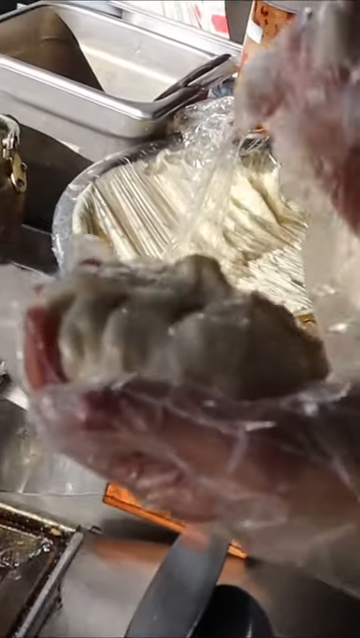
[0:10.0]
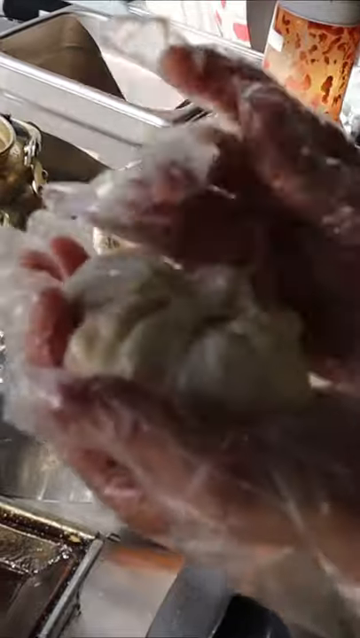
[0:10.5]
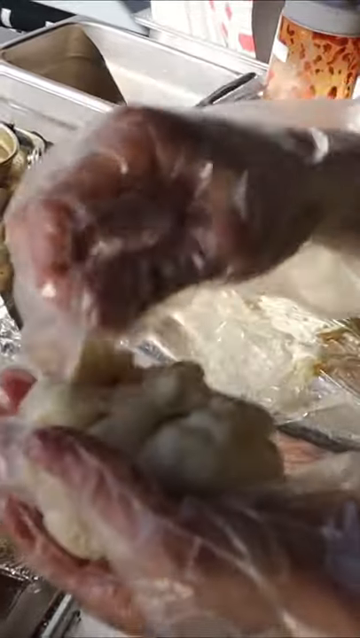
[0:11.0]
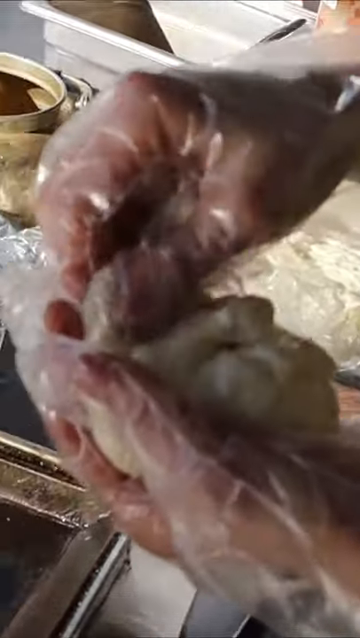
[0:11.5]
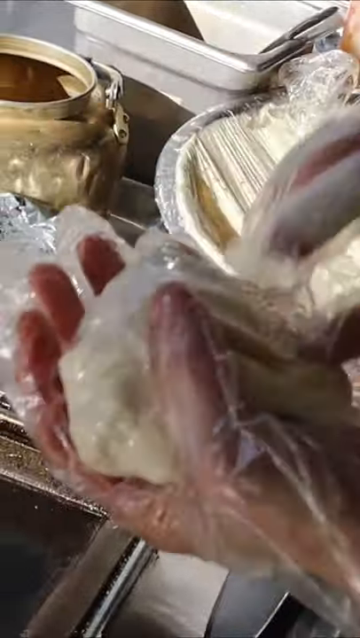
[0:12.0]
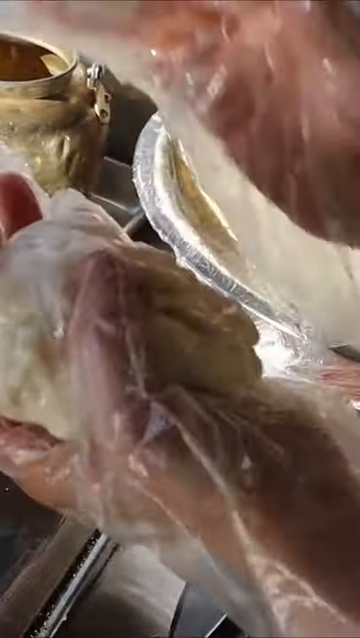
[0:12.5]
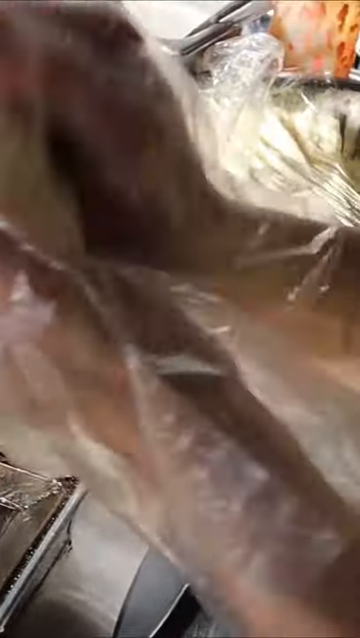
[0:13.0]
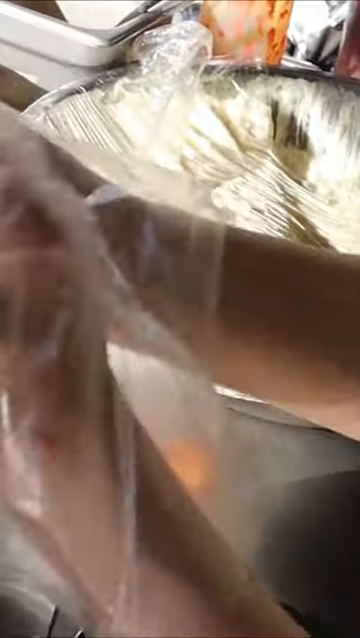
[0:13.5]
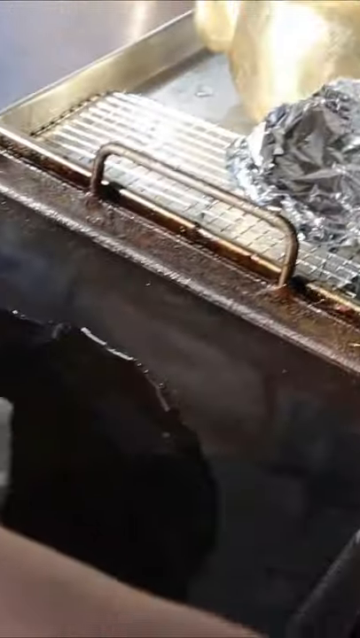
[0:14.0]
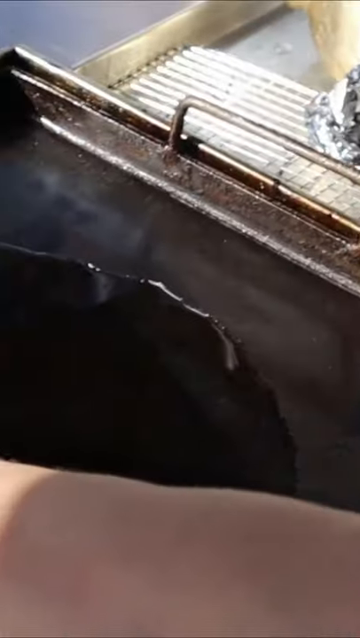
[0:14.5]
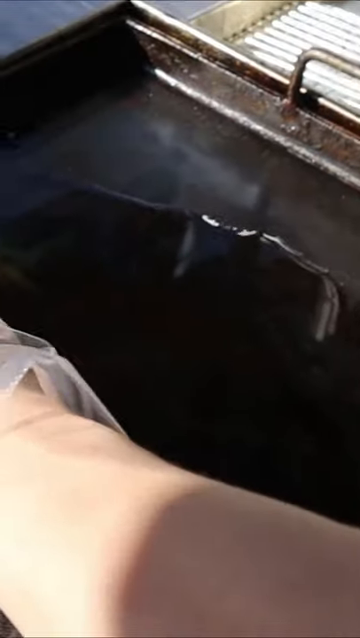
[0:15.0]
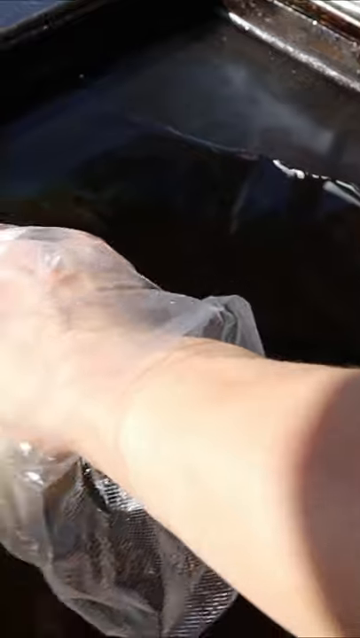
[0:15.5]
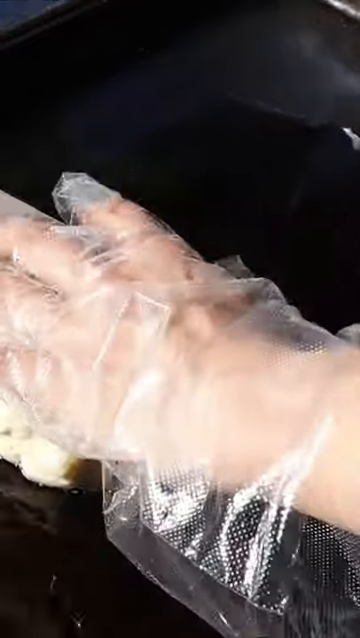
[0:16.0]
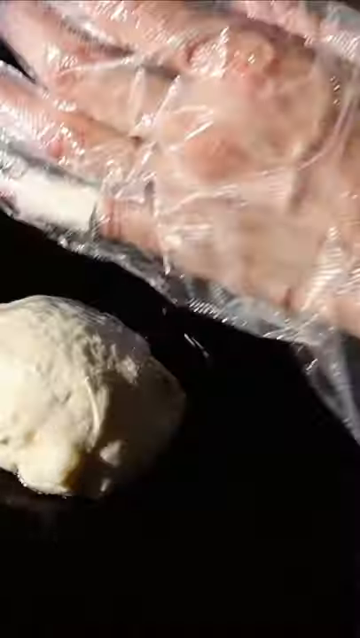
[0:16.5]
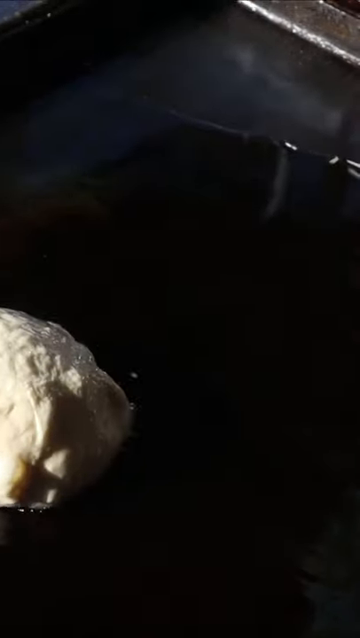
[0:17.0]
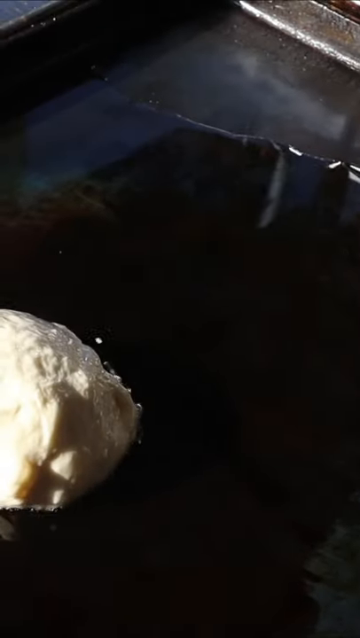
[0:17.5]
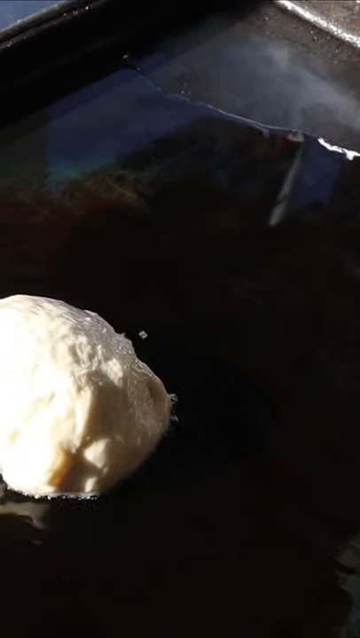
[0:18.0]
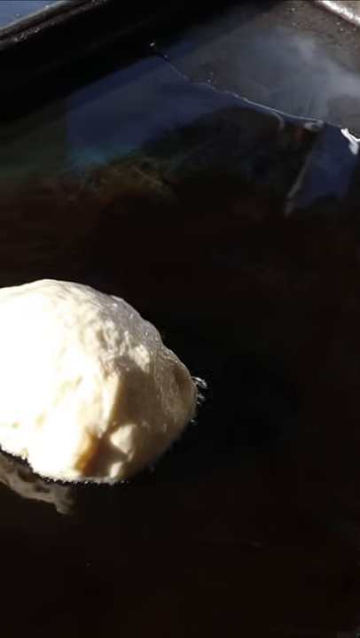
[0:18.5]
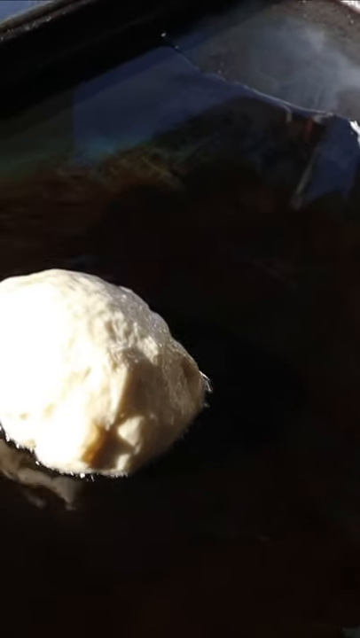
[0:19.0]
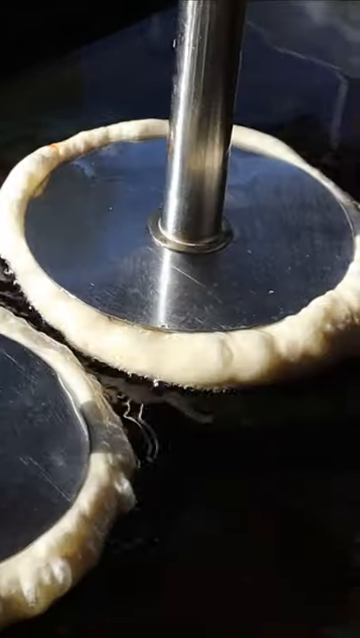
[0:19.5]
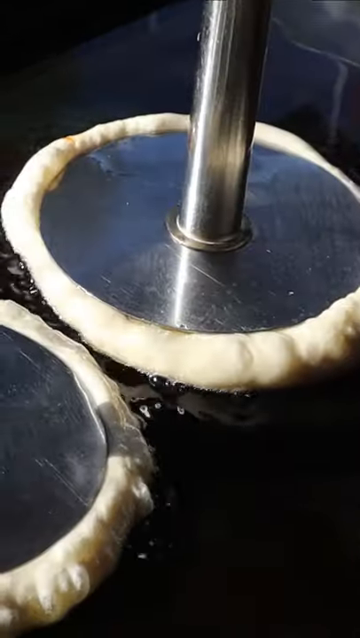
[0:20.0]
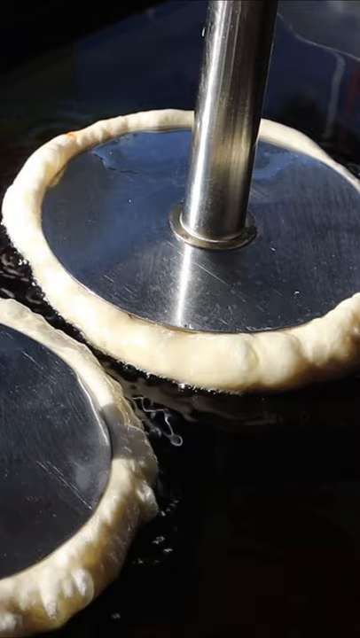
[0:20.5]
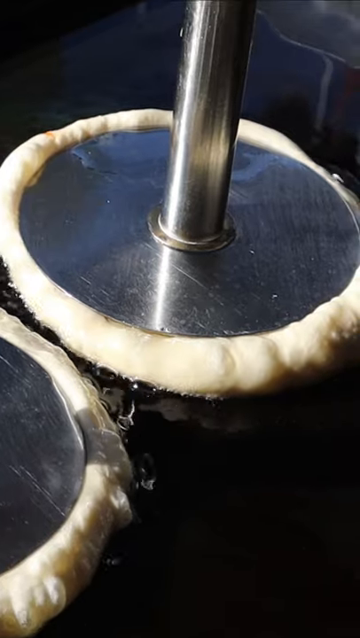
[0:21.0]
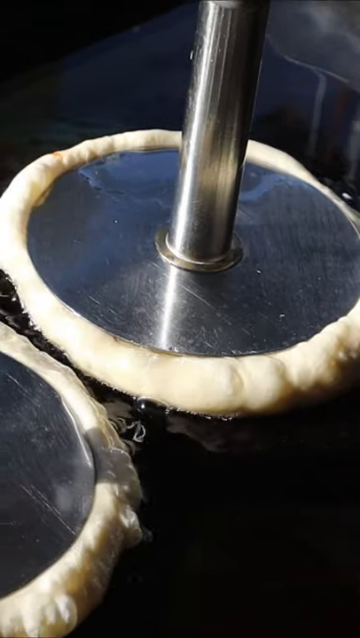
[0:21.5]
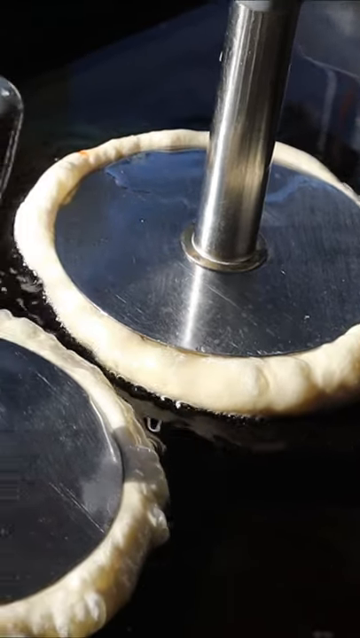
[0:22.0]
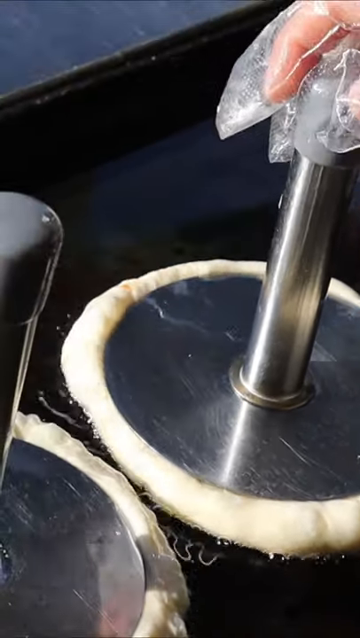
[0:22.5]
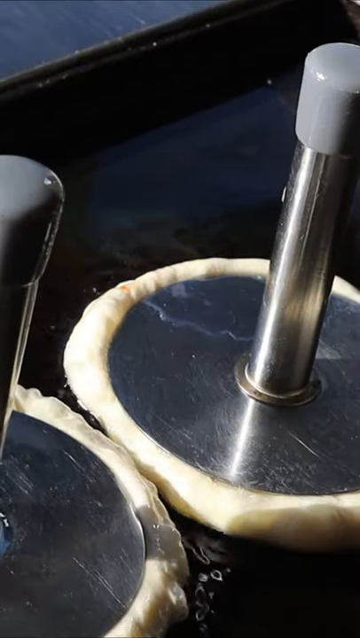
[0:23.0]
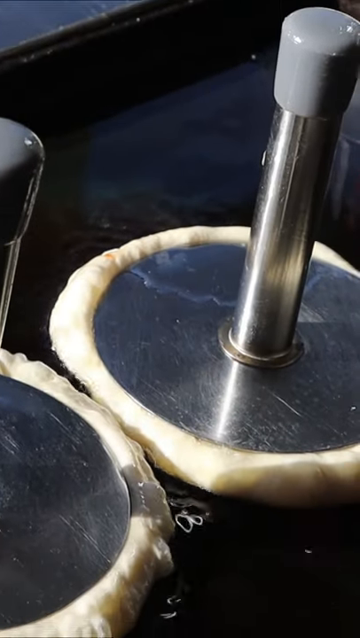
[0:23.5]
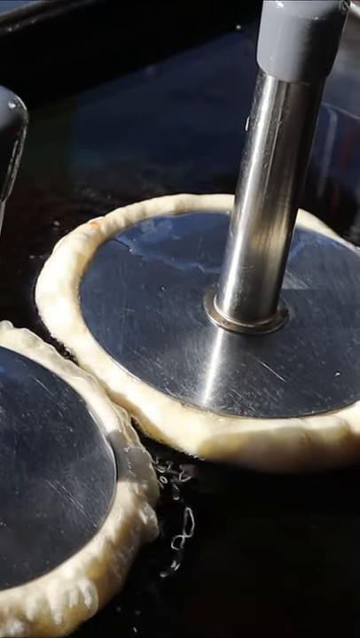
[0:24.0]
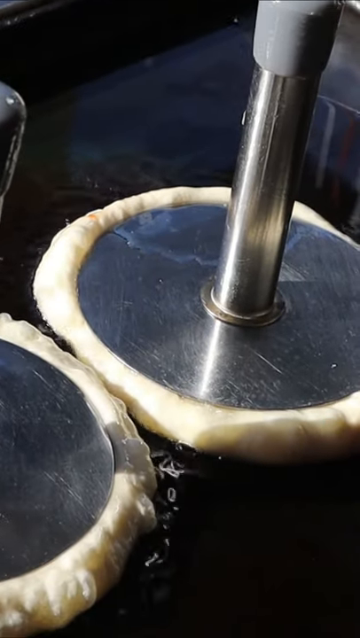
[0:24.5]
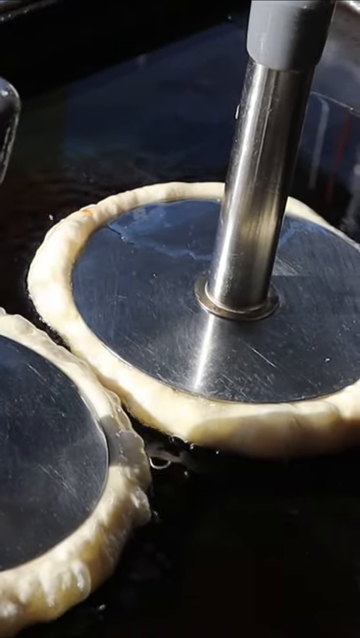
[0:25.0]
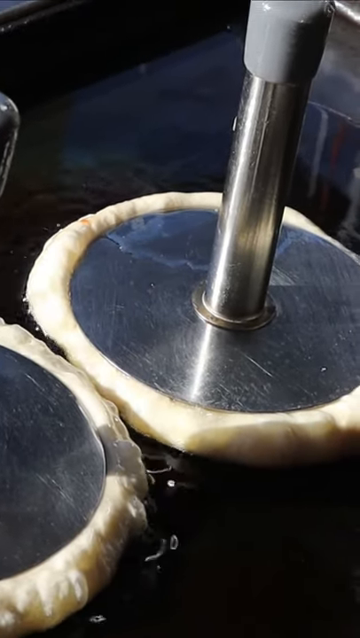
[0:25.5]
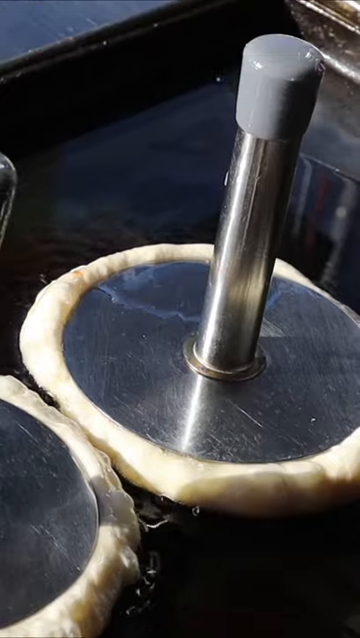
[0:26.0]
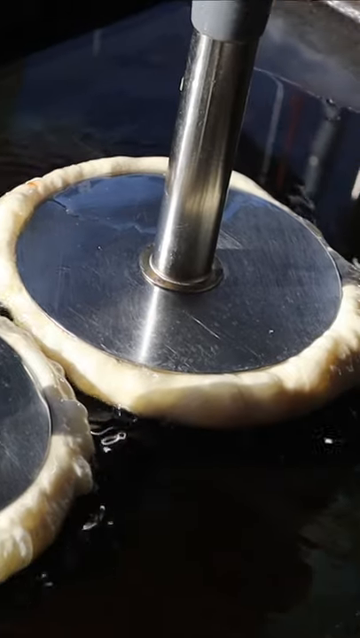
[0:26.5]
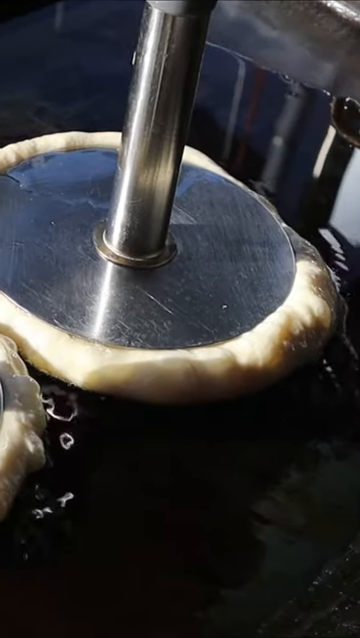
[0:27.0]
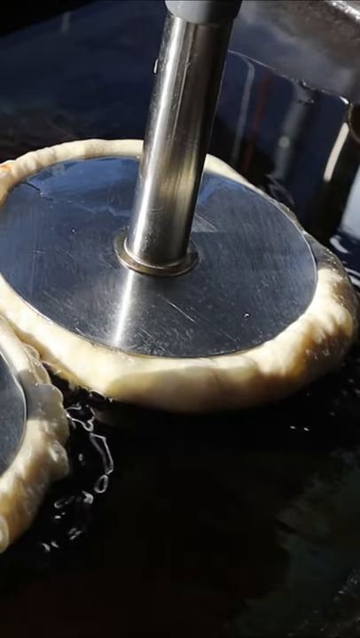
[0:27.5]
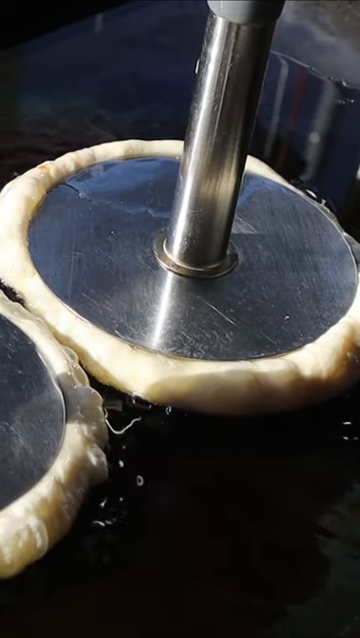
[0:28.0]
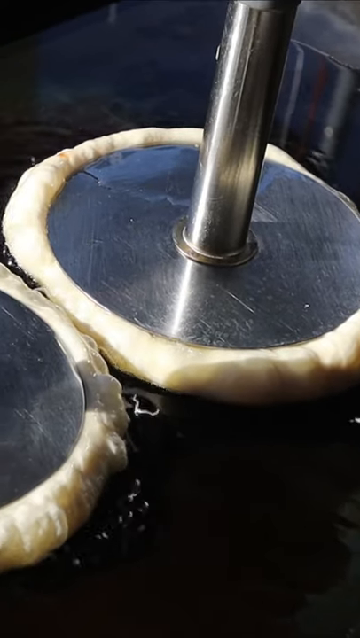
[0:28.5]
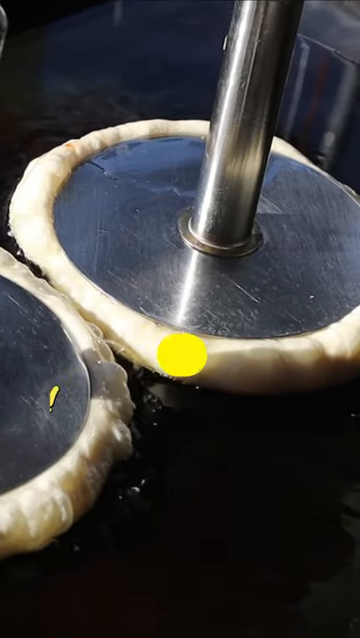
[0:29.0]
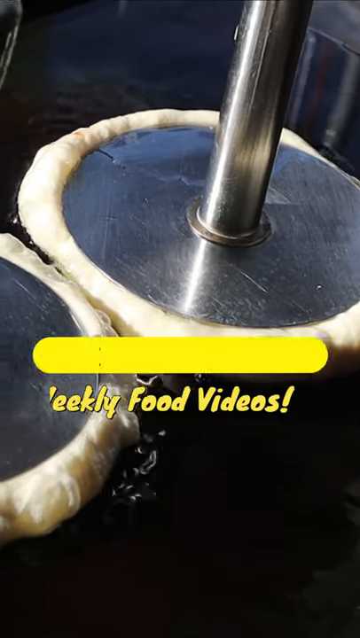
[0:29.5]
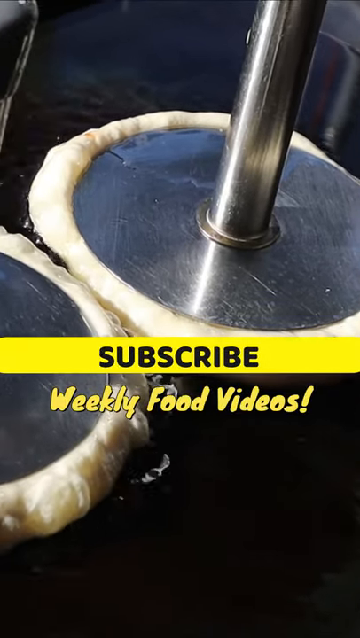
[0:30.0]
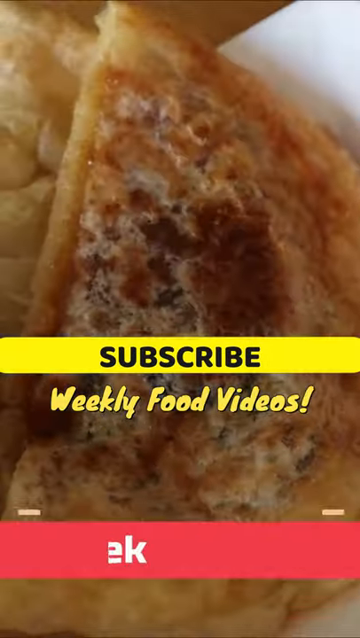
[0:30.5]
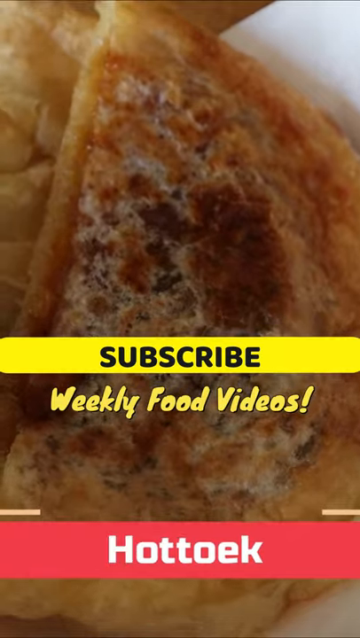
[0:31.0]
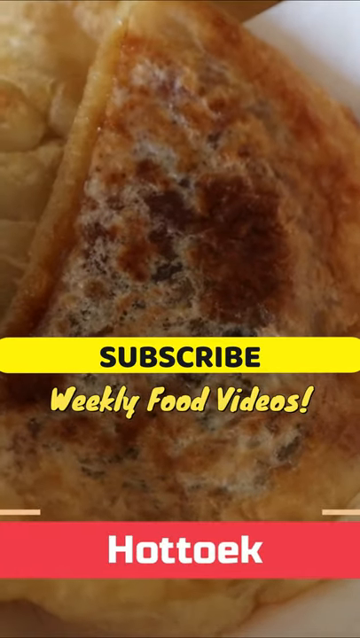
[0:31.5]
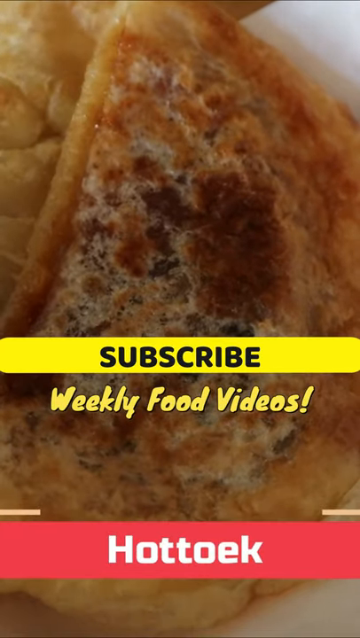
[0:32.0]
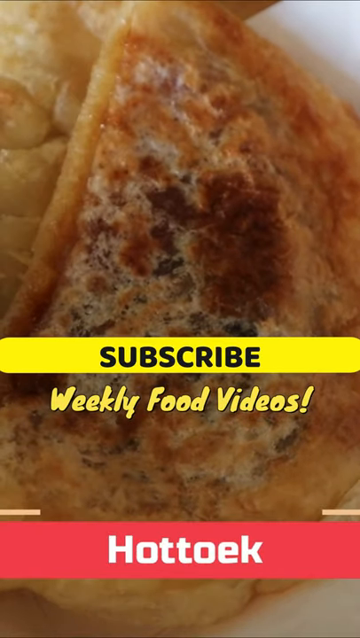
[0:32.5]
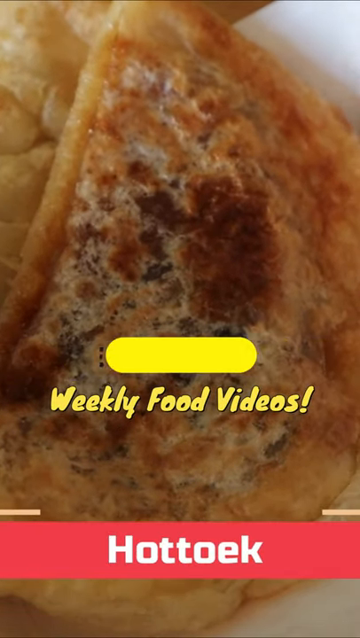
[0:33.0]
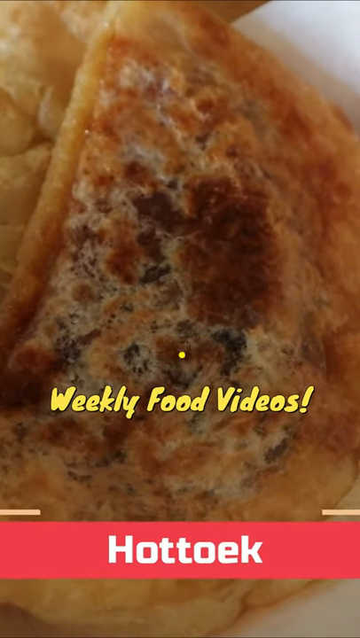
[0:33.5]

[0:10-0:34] The person holds the dough in their hands and rolls something like a vienna inside it. She then puts the dough into a frying pan containing cooking oil so it can fry until well cooked. After the dough is in, something flat is placed on top of it so it flattens as it fries. The final, well-cooked product is then displayed on the screen: the hot dog, now very flat. Other food videos then appear on the screen.